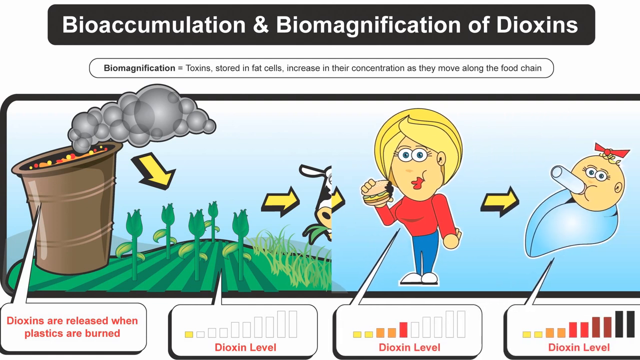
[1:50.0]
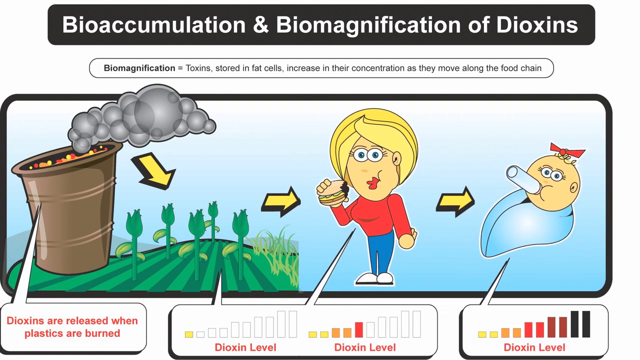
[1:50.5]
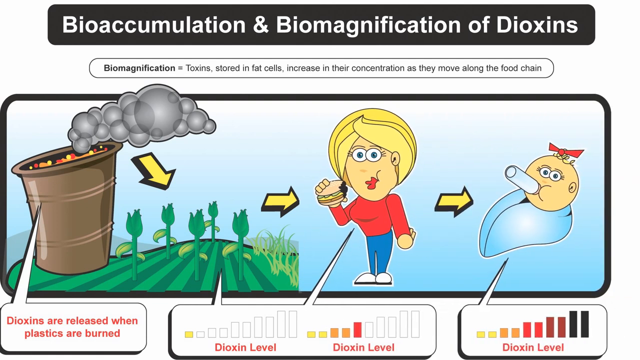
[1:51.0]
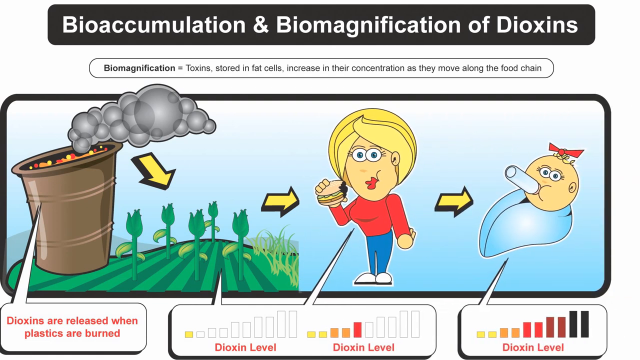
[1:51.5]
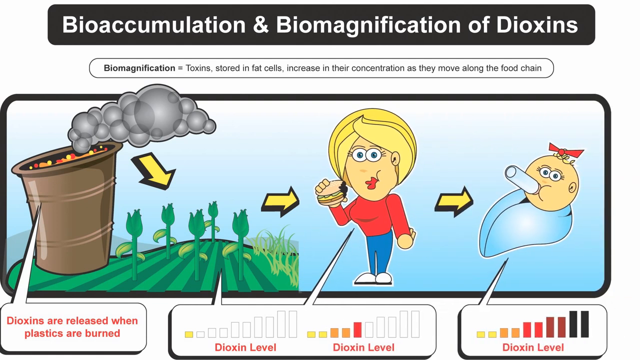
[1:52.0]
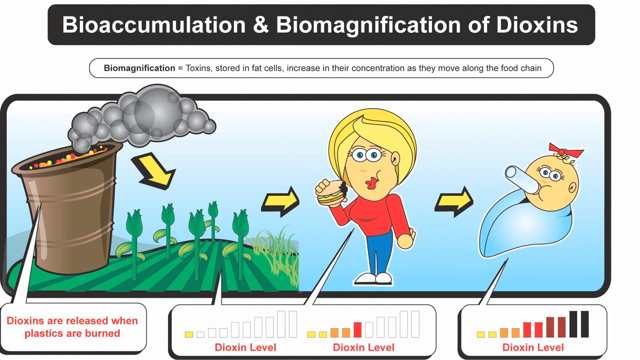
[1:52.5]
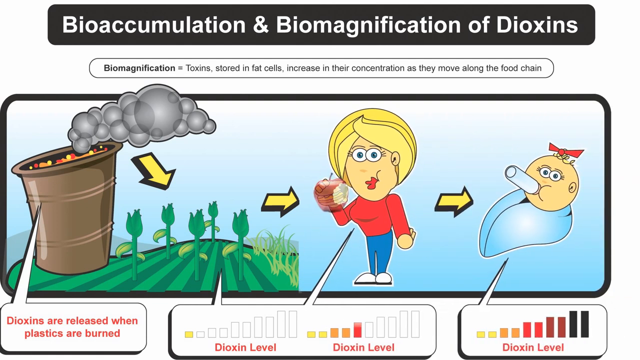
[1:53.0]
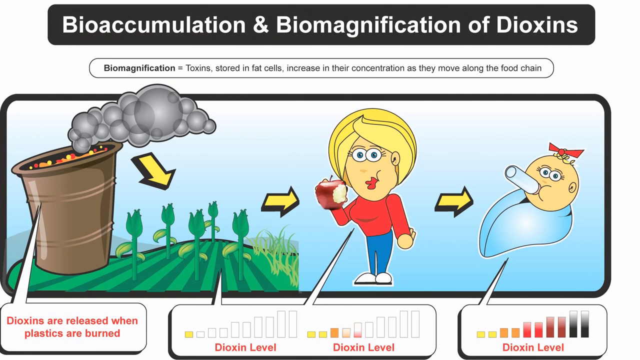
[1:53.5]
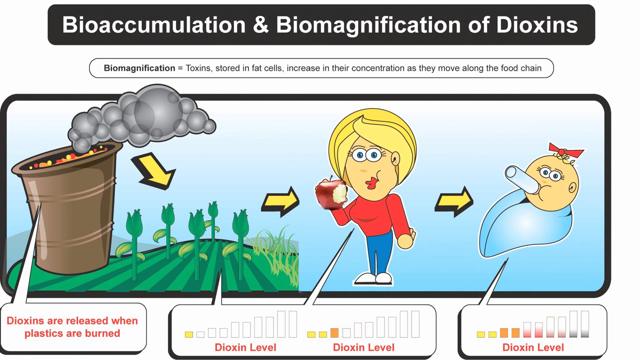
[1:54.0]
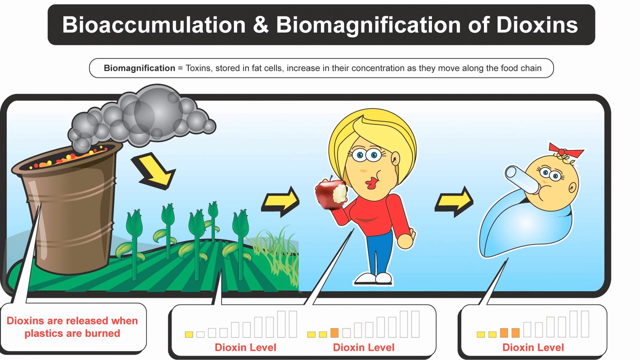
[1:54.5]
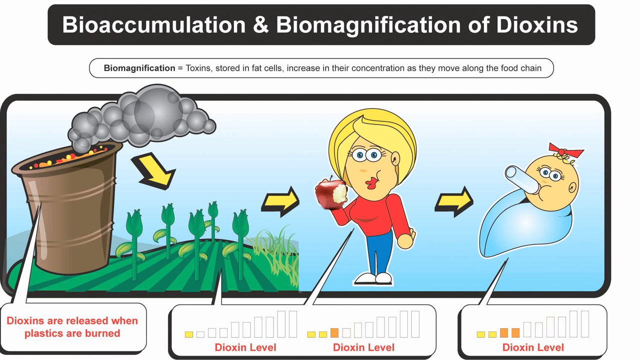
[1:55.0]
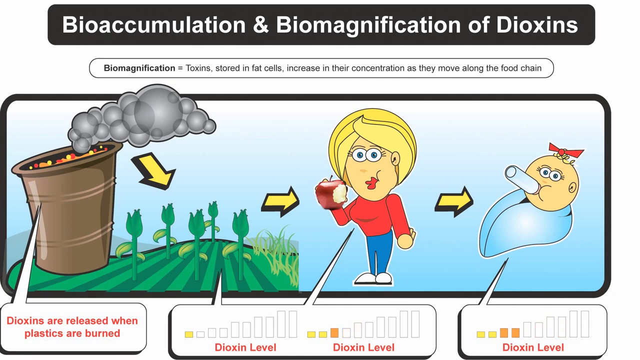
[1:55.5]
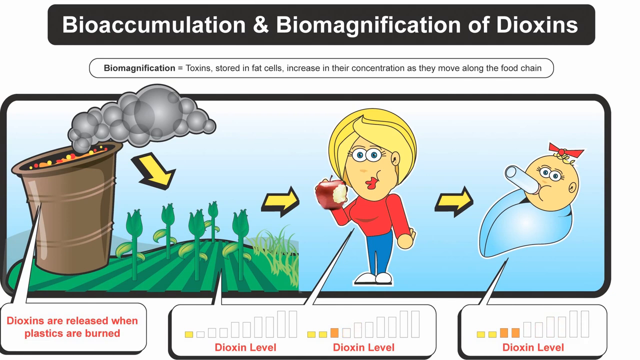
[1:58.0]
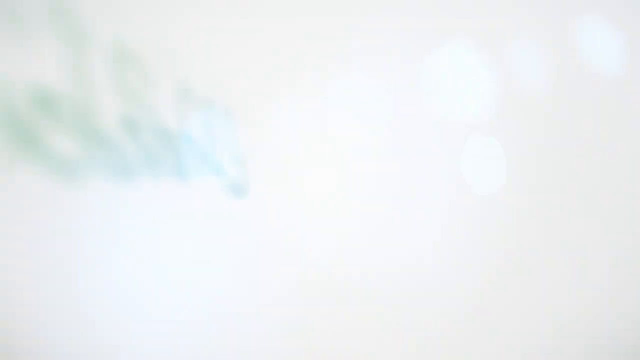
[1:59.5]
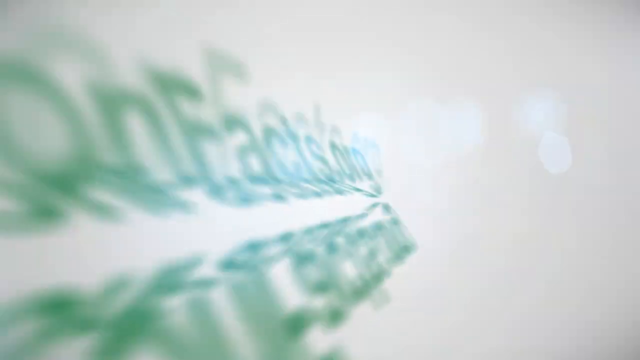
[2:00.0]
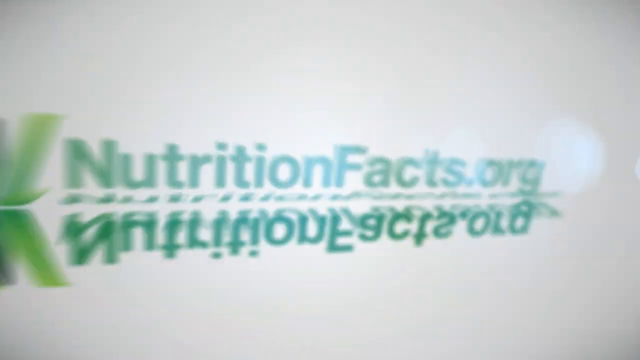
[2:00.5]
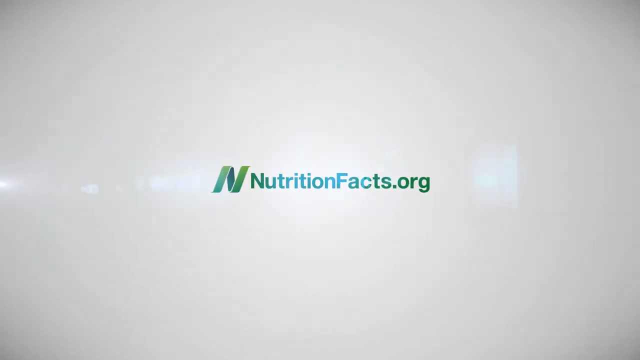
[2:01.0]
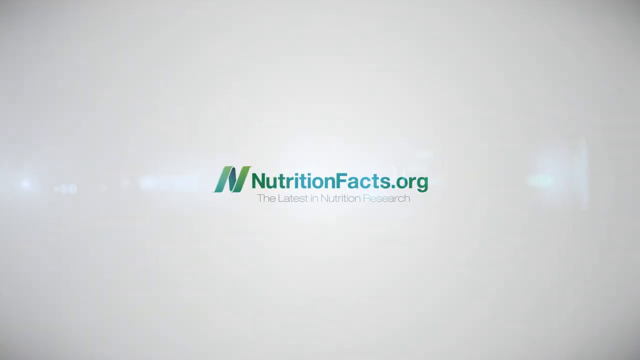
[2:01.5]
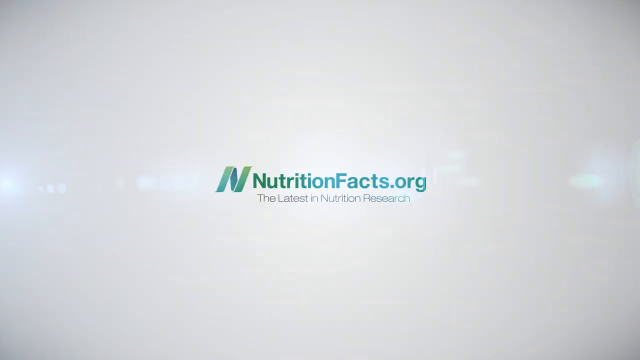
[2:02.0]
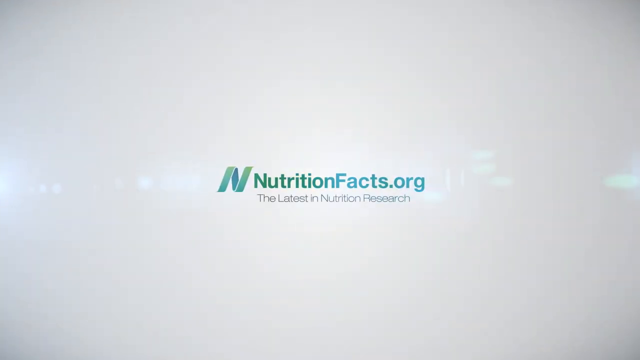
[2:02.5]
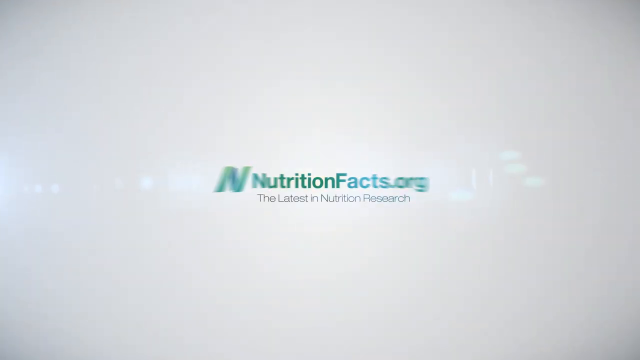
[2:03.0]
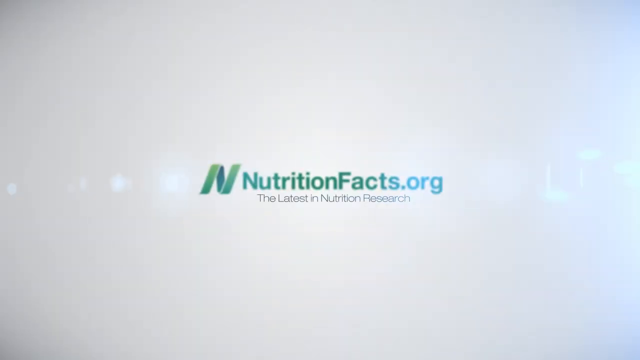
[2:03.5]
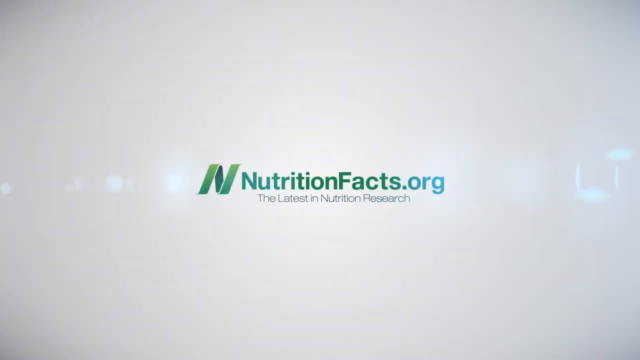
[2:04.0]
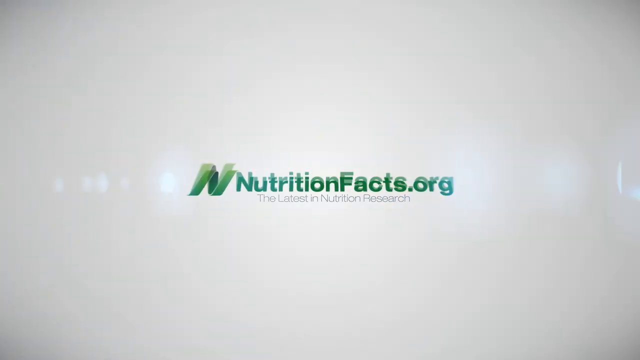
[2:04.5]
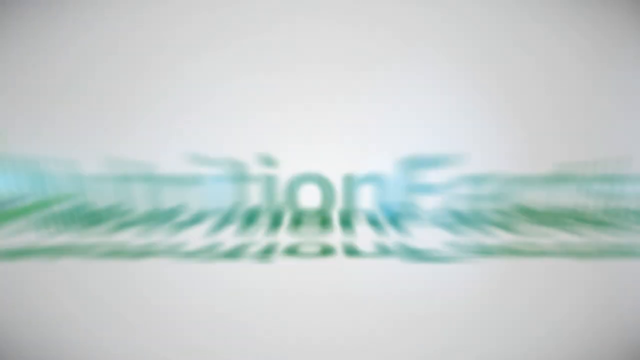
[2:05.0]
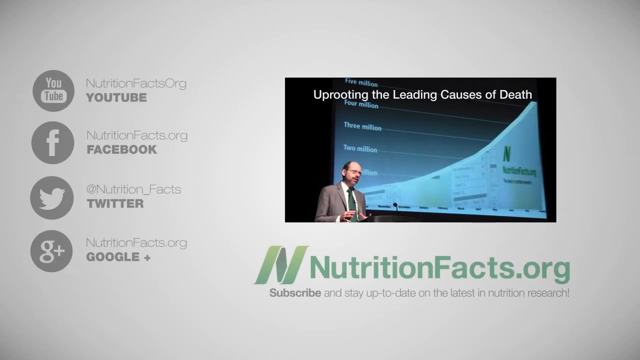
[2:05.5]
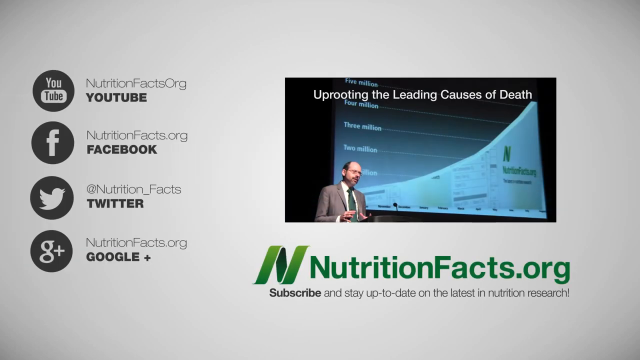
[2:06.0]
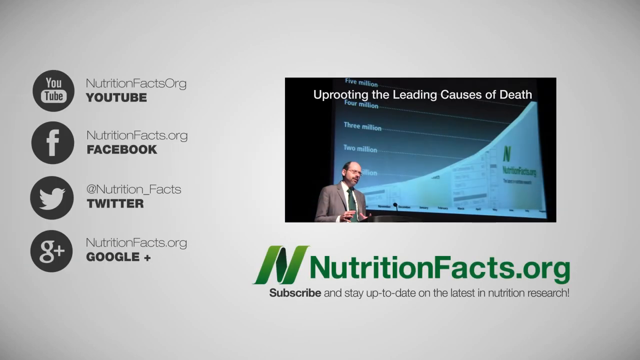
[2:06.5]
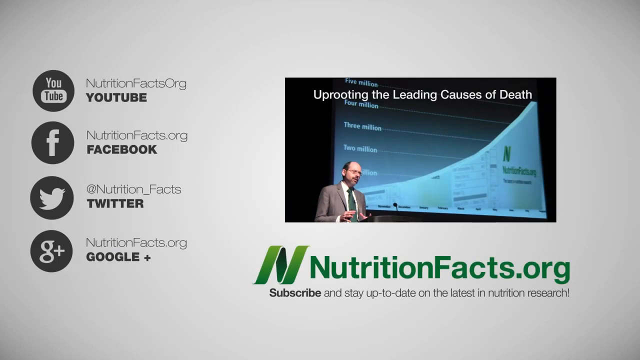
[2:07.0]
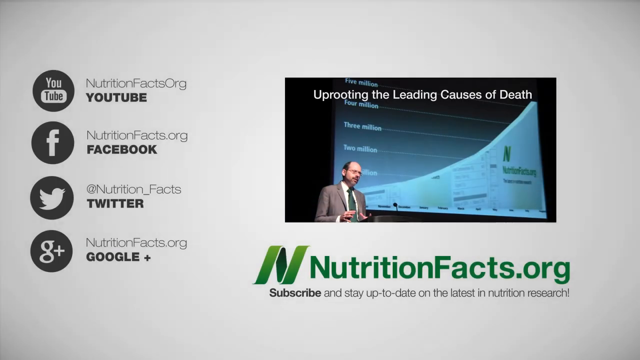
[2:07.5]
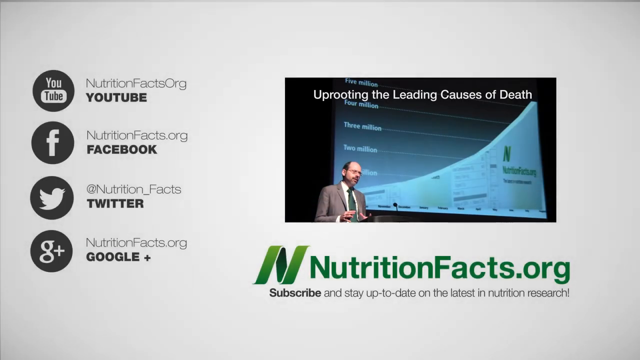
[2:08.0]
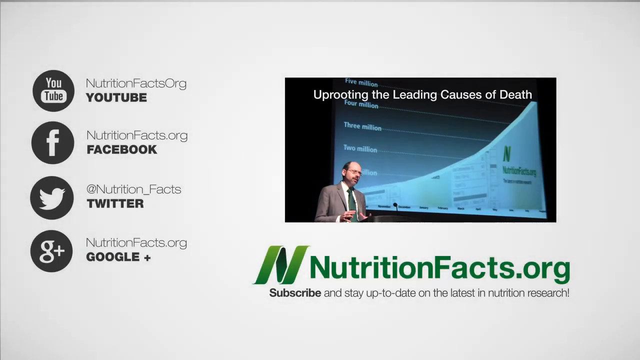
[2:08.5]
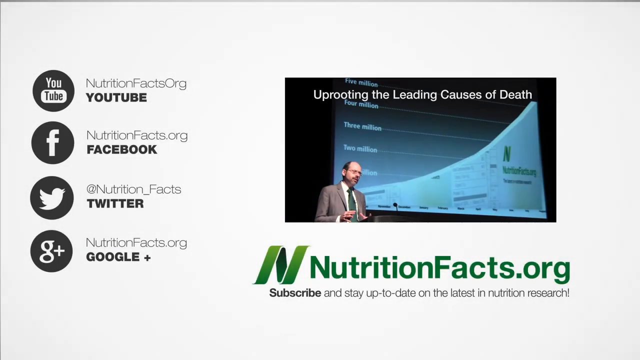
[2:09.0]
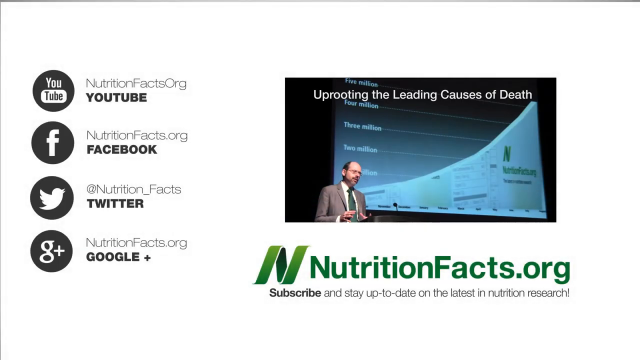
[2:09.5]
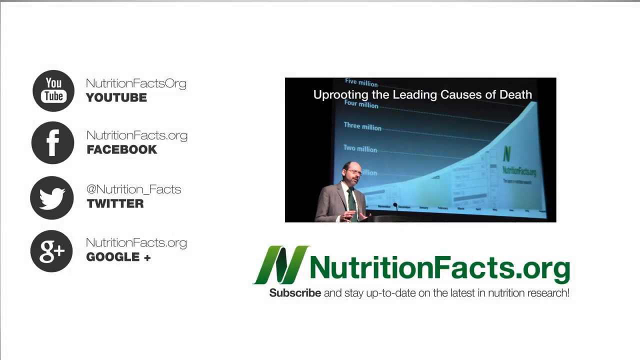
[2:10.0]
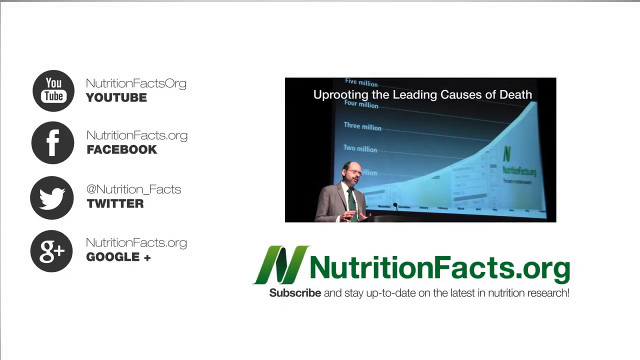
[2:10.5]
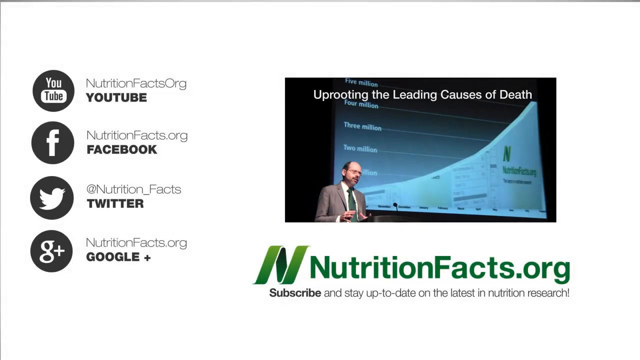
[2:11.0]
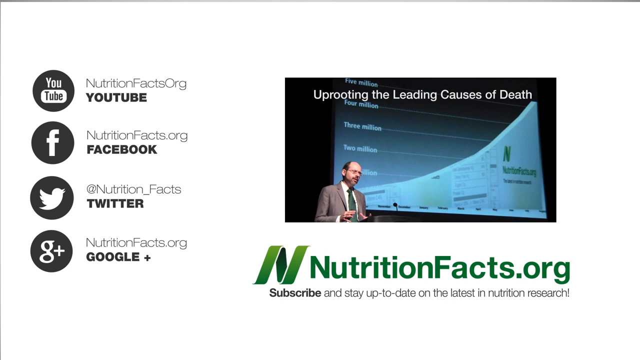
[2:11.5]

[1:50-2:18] At the top of the screen, in white on a long black stripe, it reads "bioaccumulation and biomagnification of dioxins." Underneath it says "biomagnification equals toxins stored in fat cells increased in their concentration as they move along the food chain." Below that is a cartoon showing a green hill with a bucket sitting on it and smoke coming out of the bucket. To the right is a cartoon woman with blonde hair, holding a hamburger in her right hand up to her face and wearing a long-sleeve red shirt, blue pants and white shoes. To her right is a baby wrapped in a blue blanket: only a round head is visible, with a bottle sticking out of its mouth, big round eyes, a red bow and one hair.